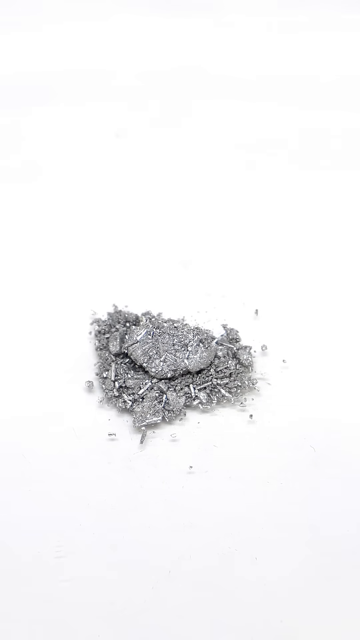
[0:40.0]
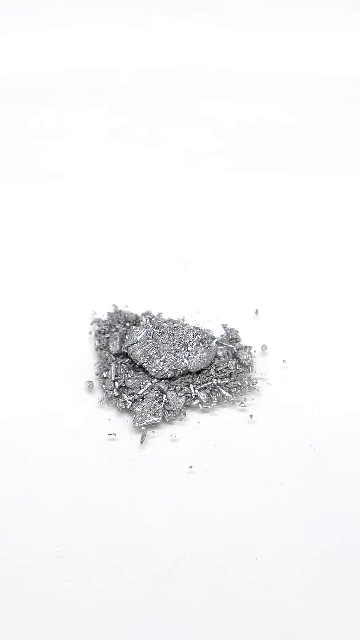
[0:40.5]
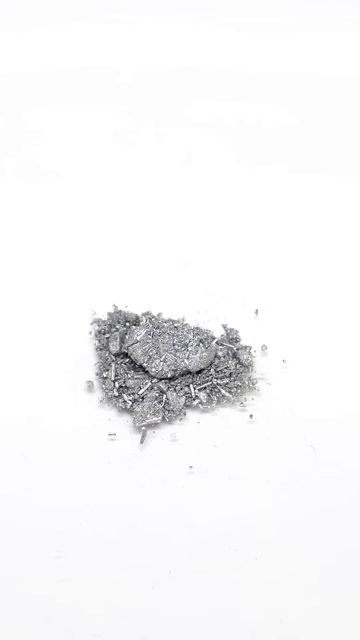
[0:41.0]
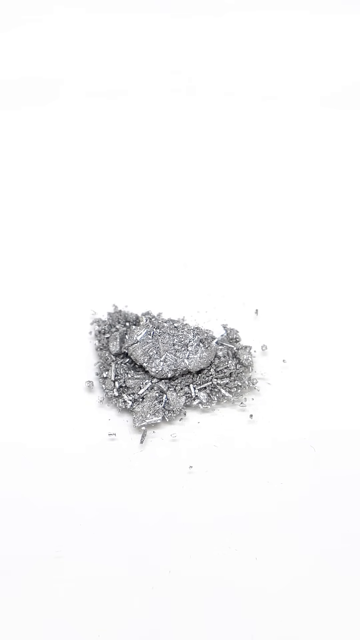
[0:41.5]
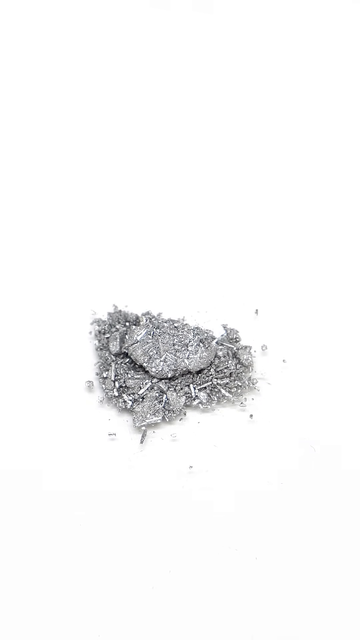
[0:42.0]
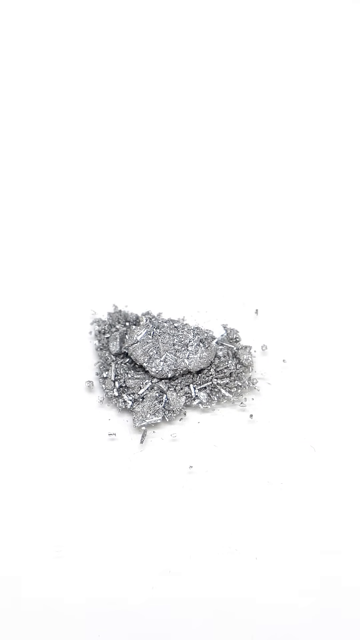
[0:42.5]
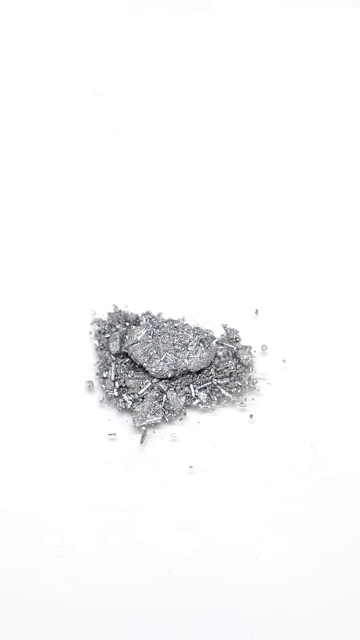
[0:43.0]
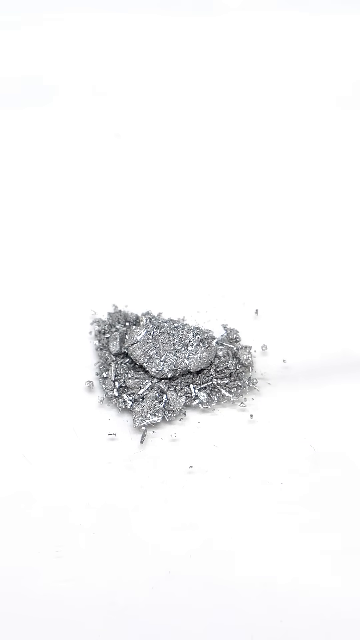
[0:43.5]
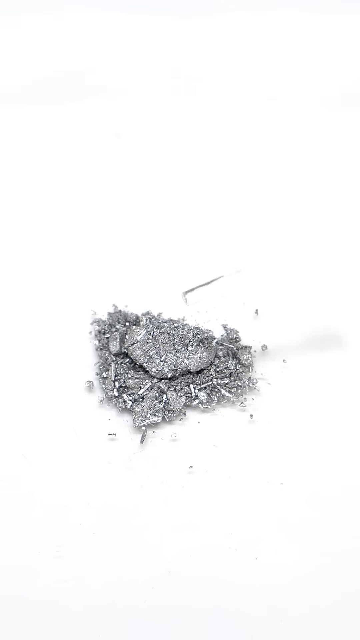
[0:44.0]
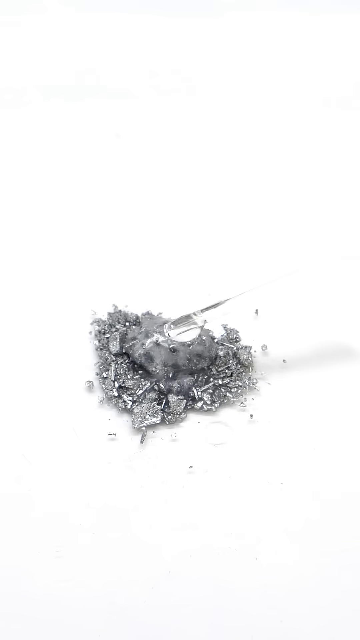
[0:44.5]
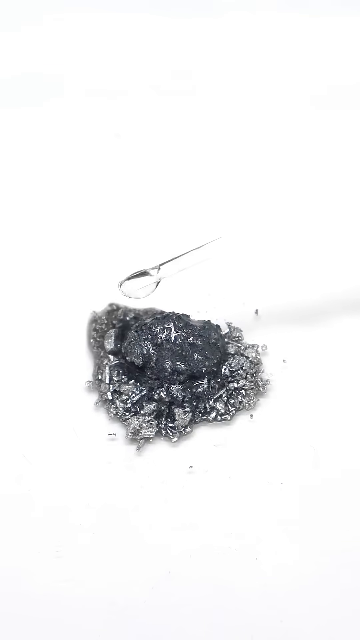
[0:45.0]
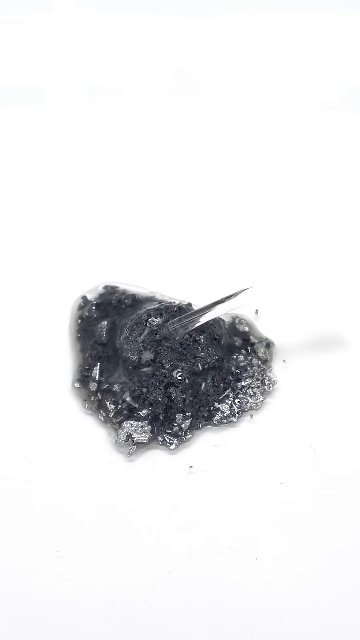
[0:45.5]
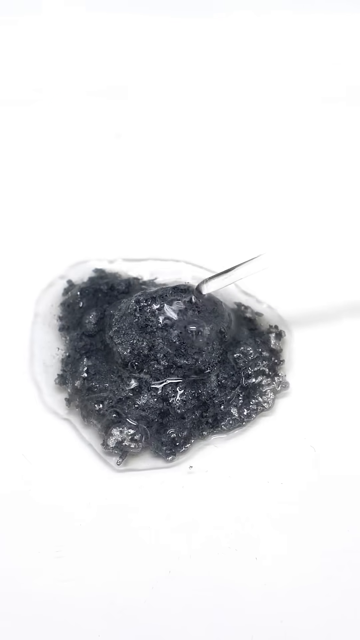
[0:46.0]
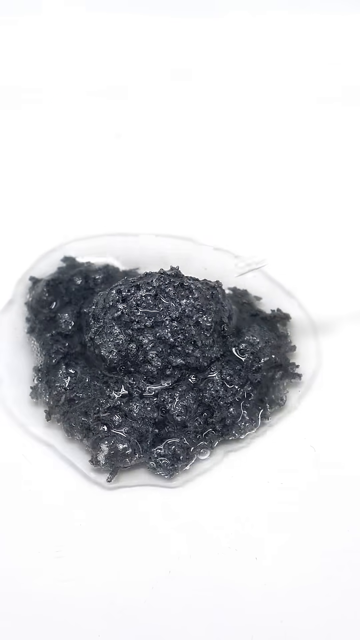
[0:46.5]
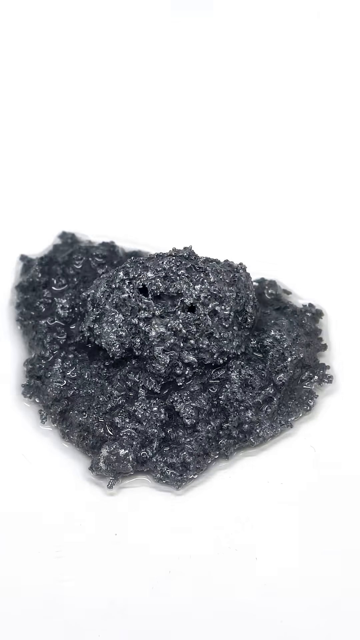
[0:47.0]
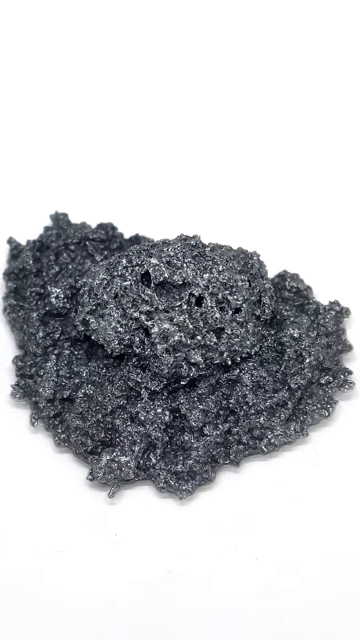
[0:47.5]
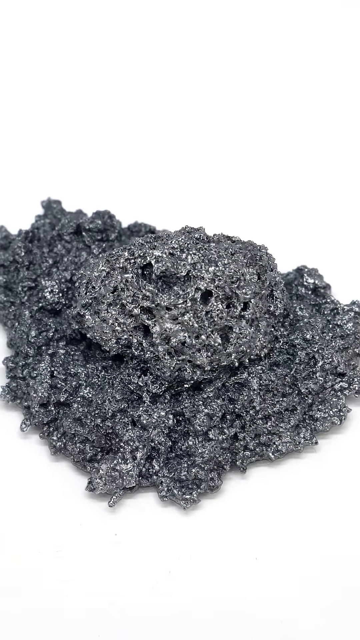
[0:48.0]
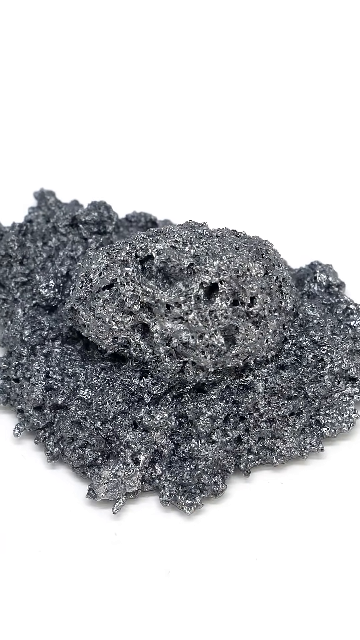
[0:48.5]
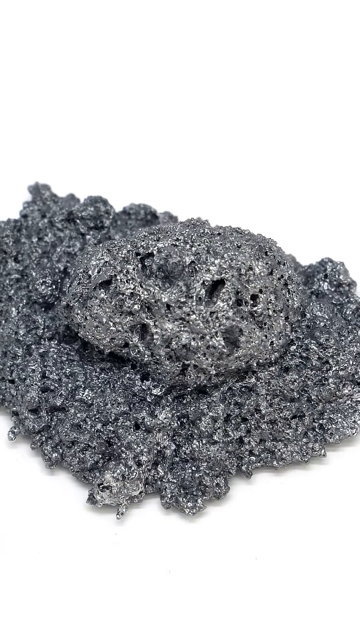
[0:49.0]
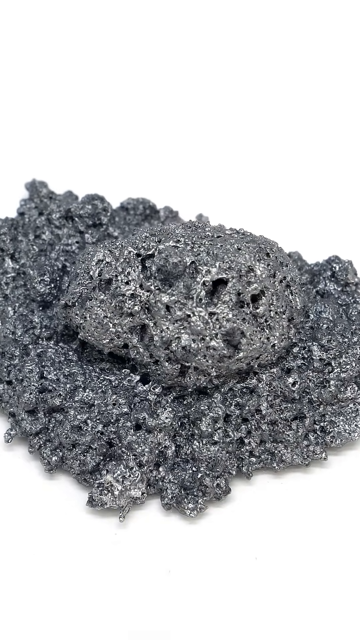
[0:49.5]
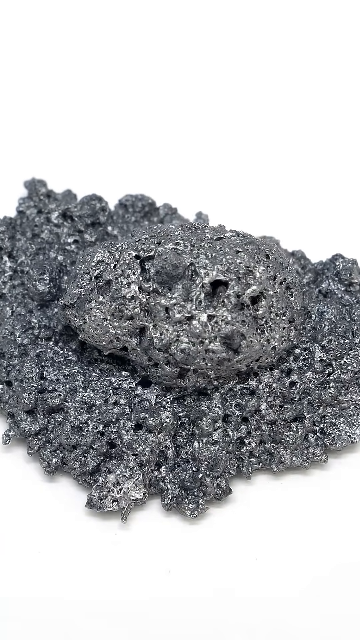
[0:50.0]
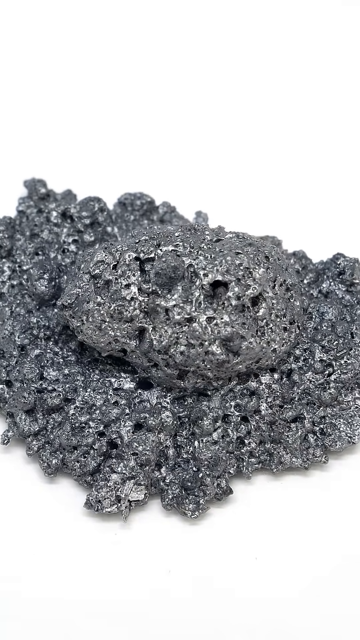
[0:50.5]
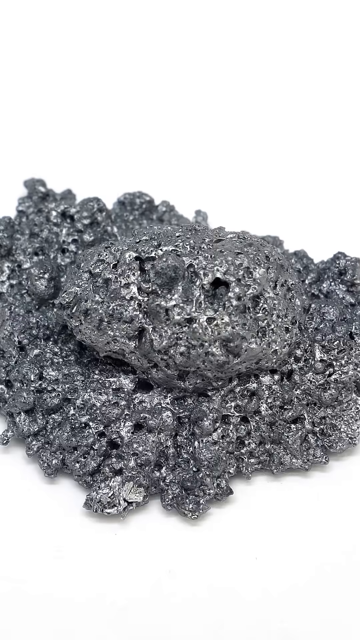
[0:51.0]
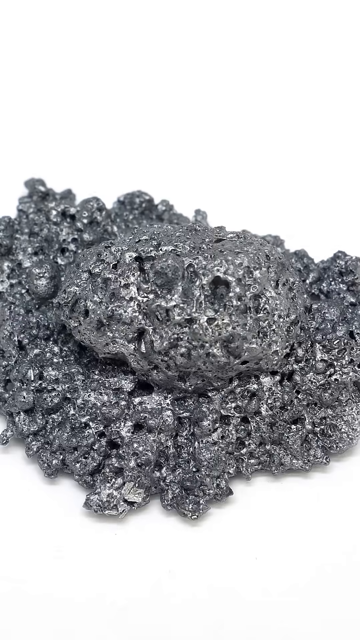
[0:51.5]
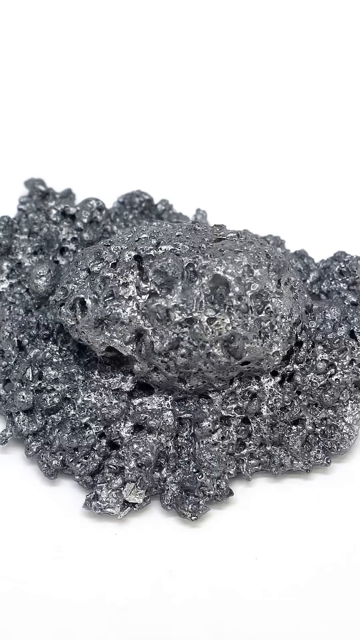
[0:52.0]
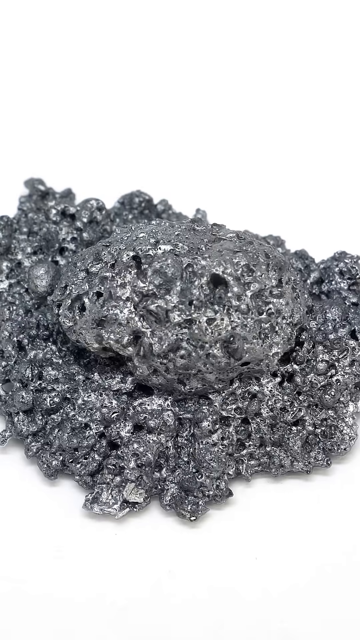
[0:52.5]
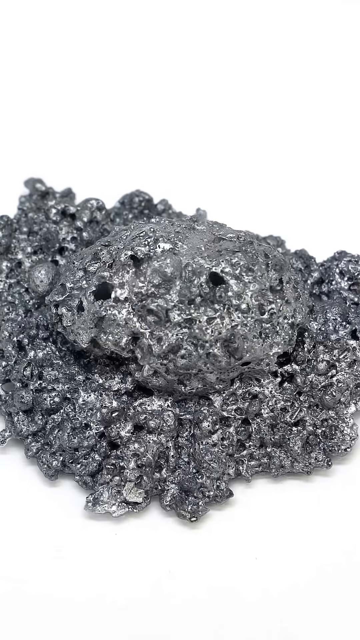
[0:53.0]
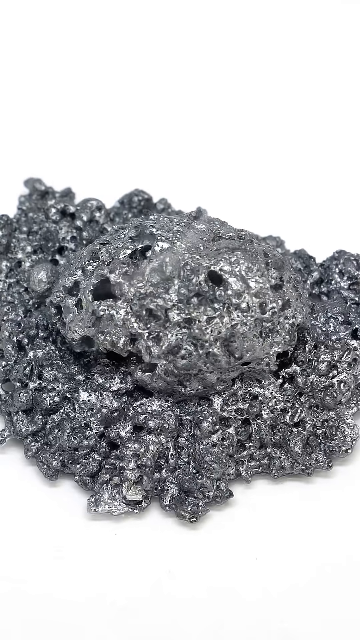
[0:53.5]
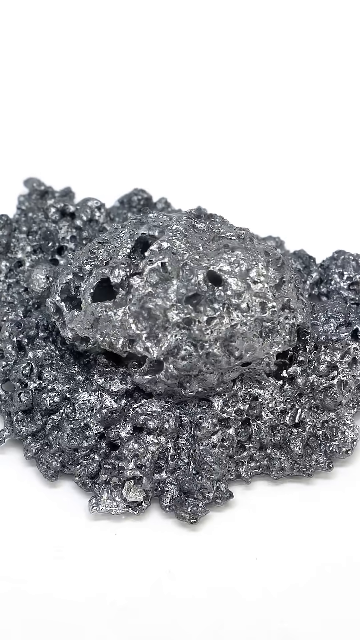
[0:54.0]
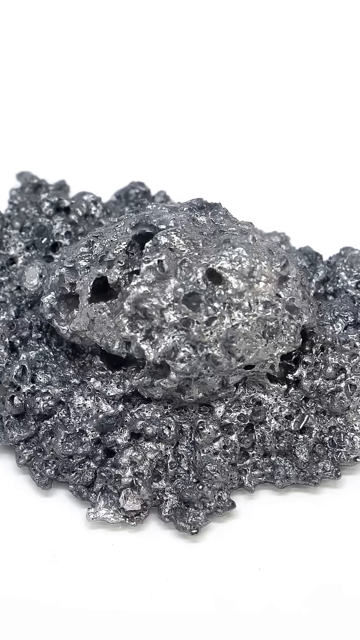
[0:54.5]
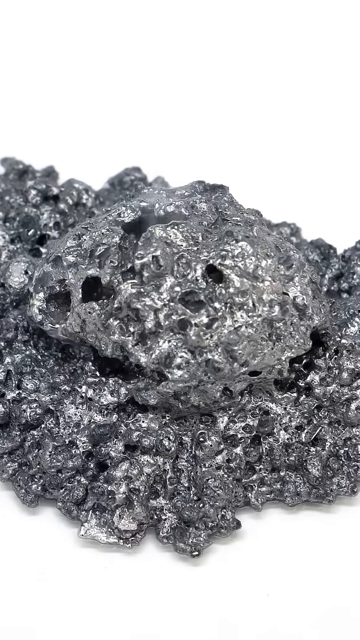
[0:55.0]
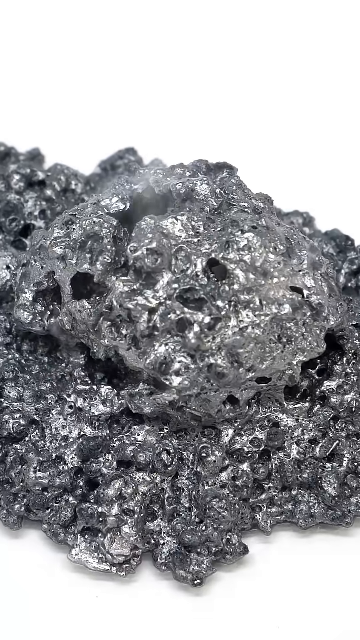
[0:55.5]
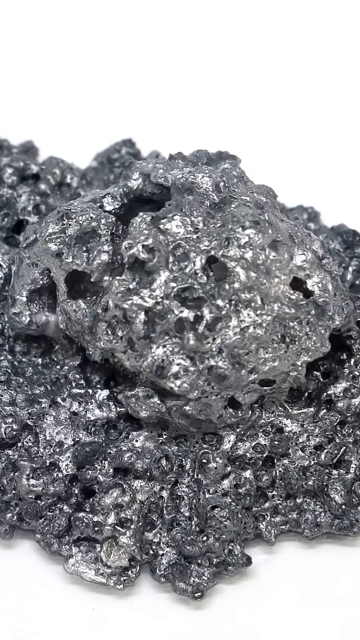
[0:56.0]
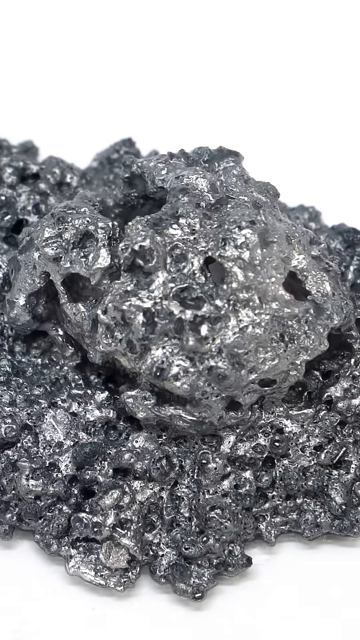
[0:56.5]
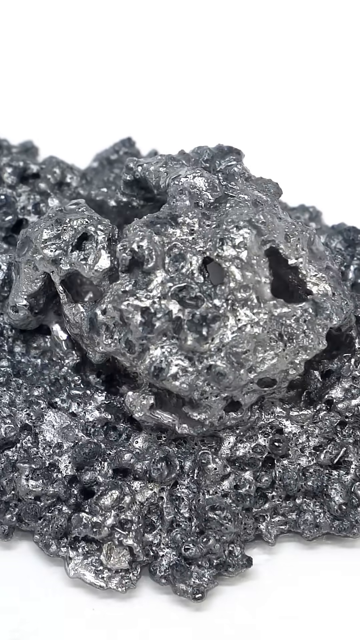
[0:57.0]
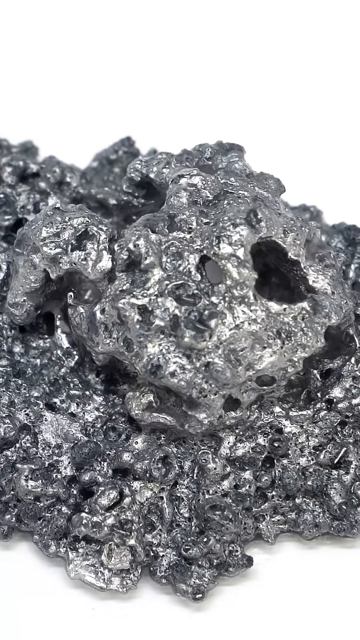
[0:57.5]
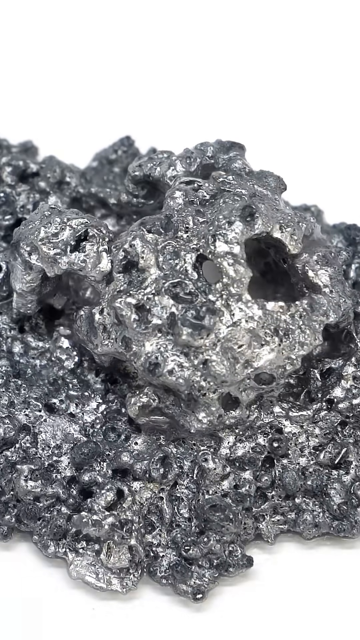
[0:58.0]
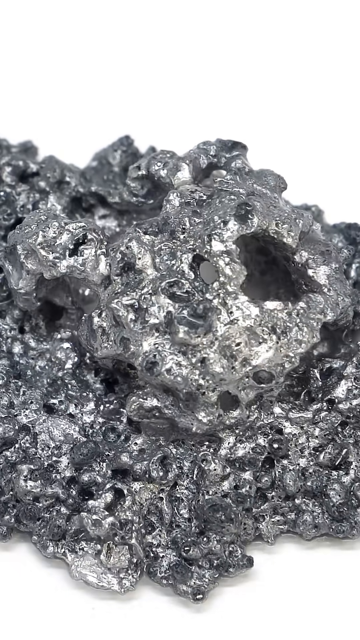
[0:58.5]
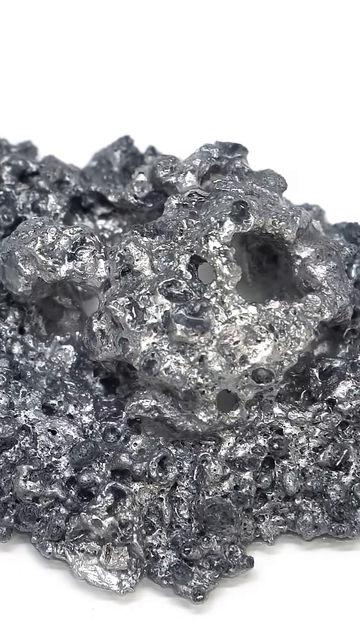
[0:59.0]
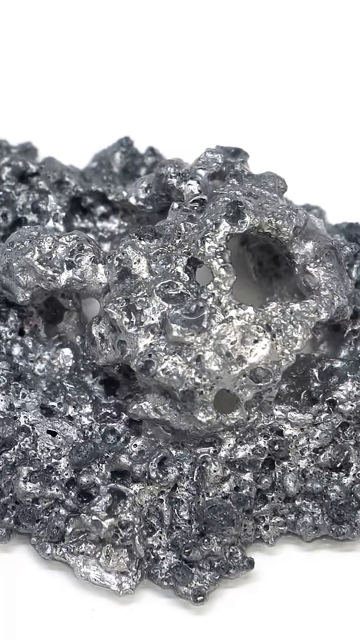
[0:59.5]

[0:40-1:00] What appear to be solid mercury filings are shown: a pile of granular metal. Some sort of unidentified liquid is dropped on it, and the pile expands and convolutes into a strange shape. The setting appears to be indoors, as the light looks artificial and very uniform.